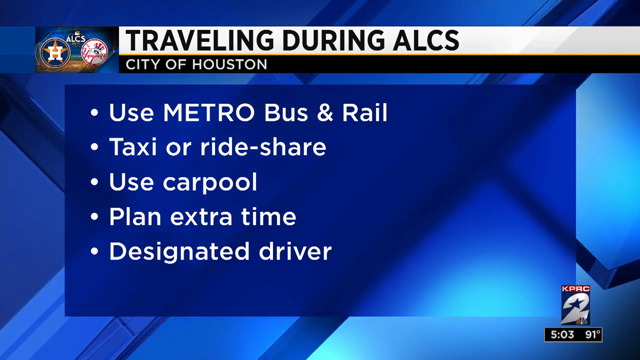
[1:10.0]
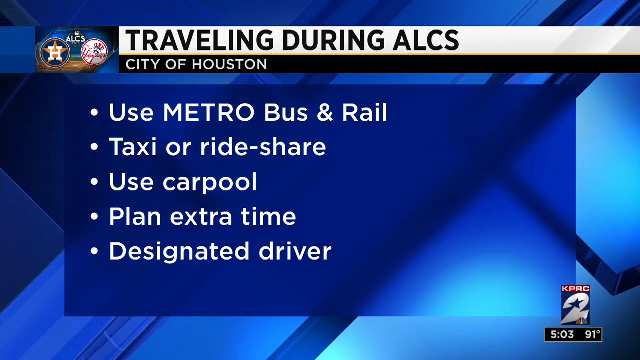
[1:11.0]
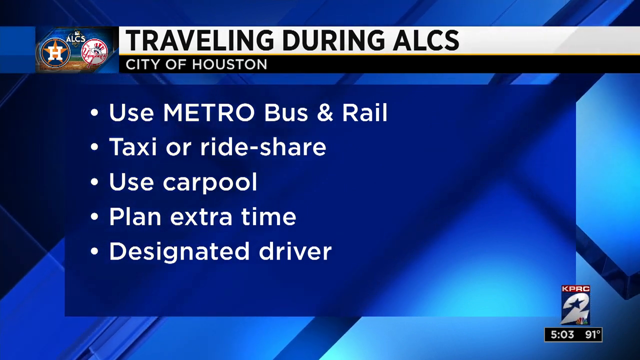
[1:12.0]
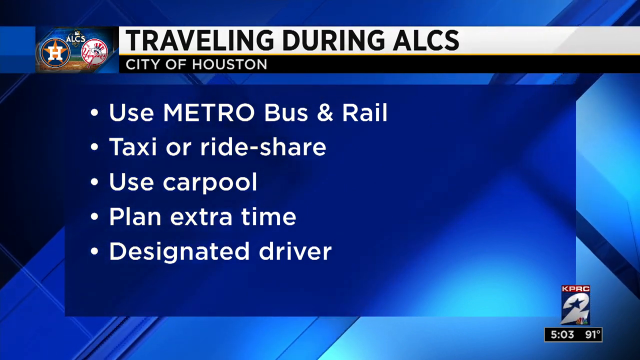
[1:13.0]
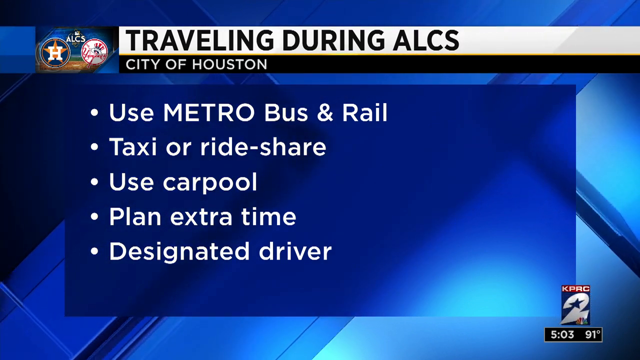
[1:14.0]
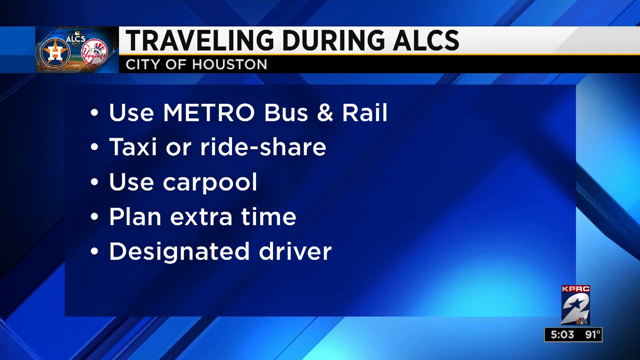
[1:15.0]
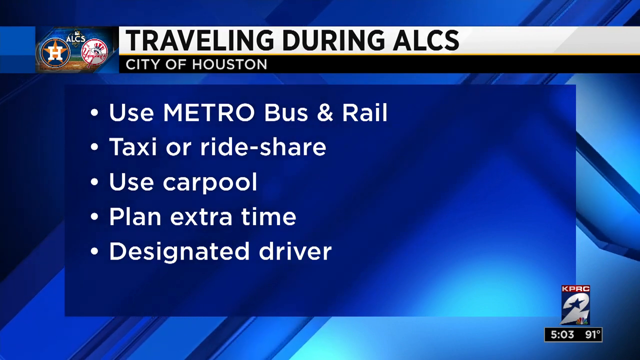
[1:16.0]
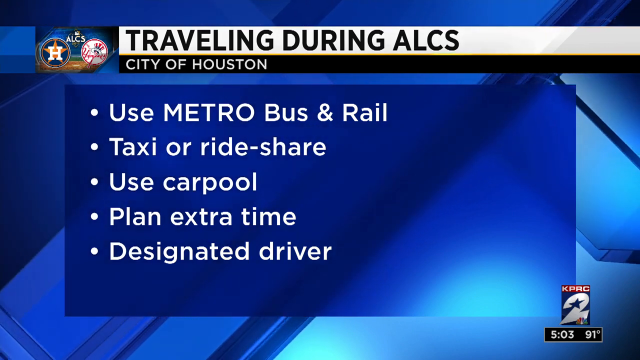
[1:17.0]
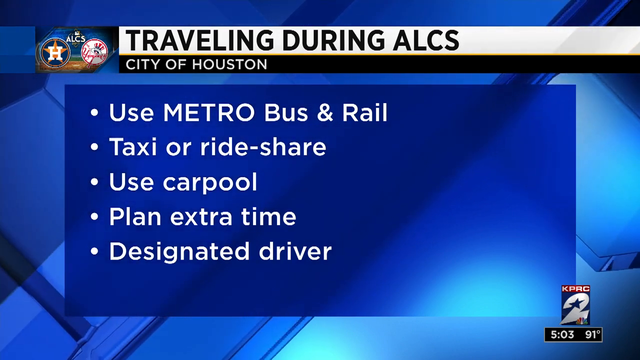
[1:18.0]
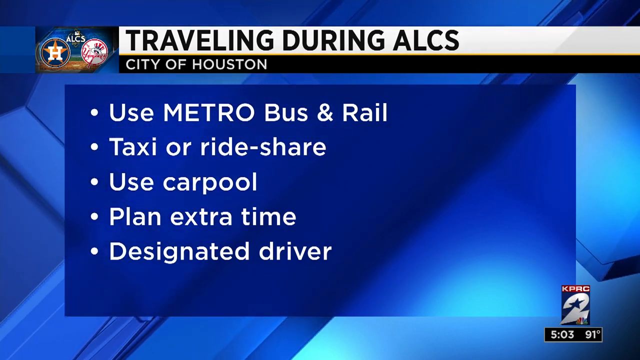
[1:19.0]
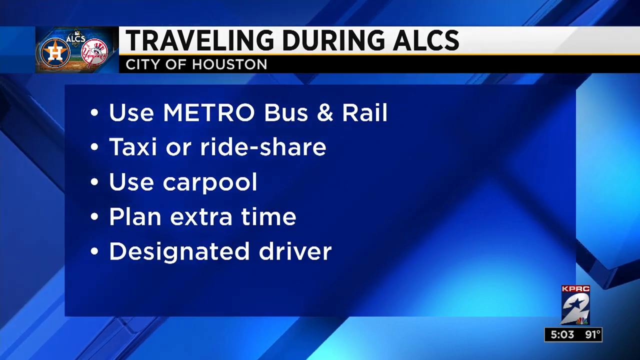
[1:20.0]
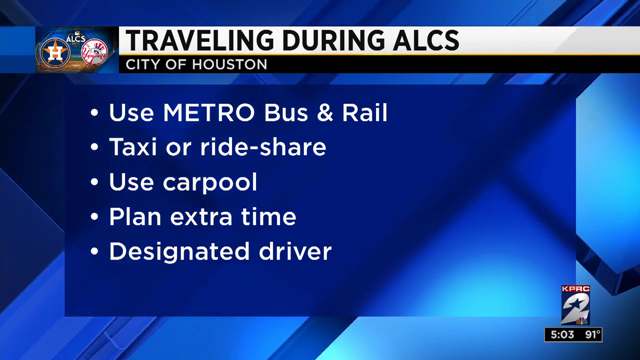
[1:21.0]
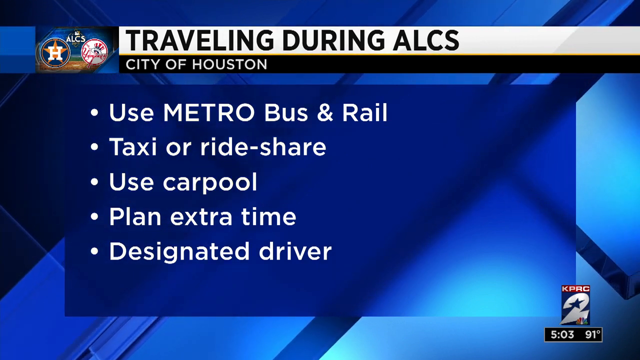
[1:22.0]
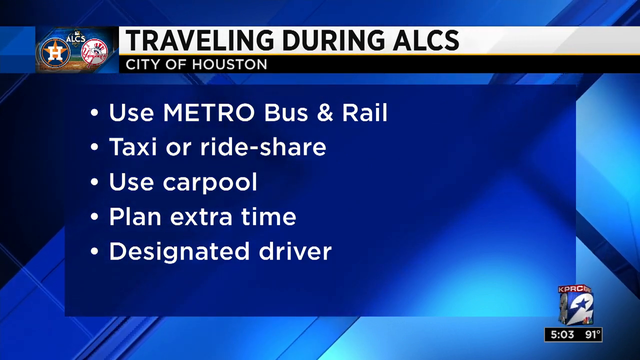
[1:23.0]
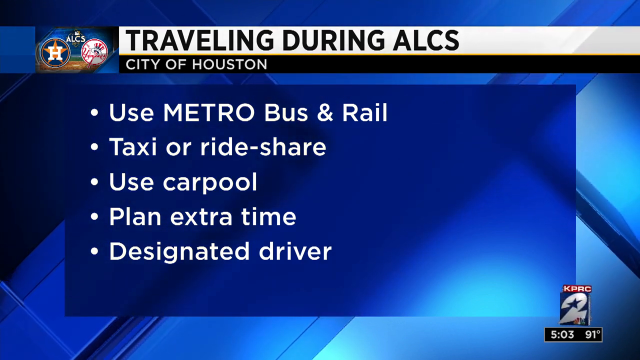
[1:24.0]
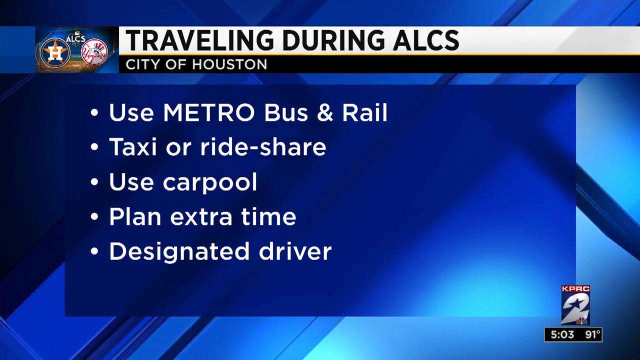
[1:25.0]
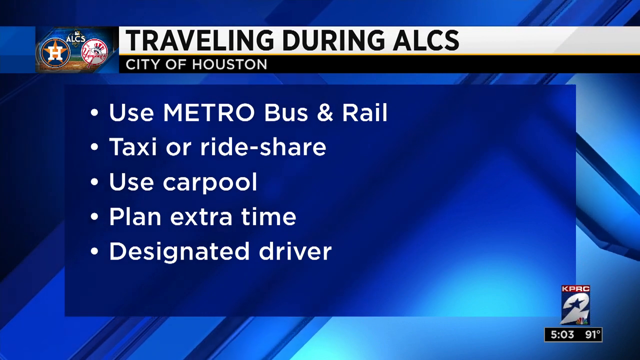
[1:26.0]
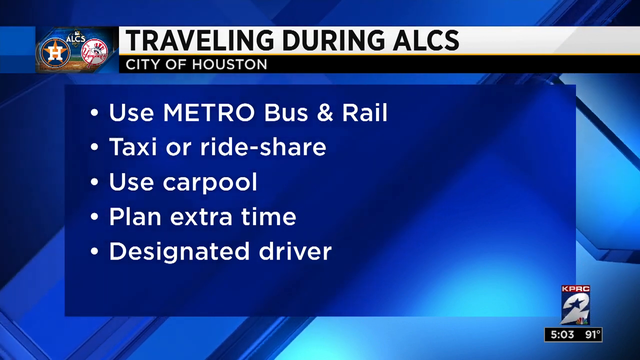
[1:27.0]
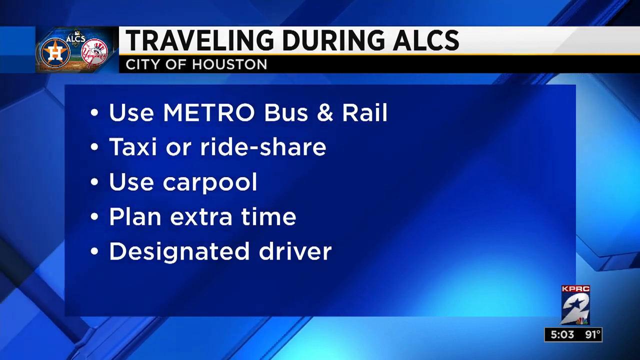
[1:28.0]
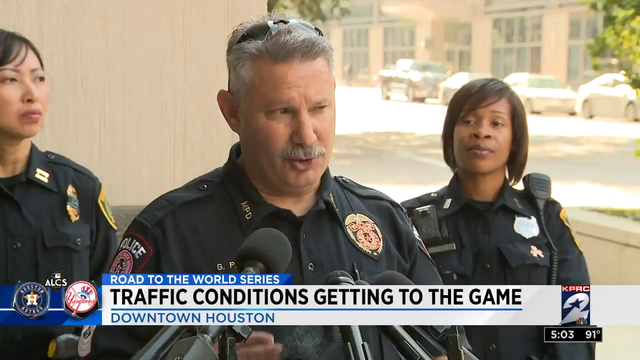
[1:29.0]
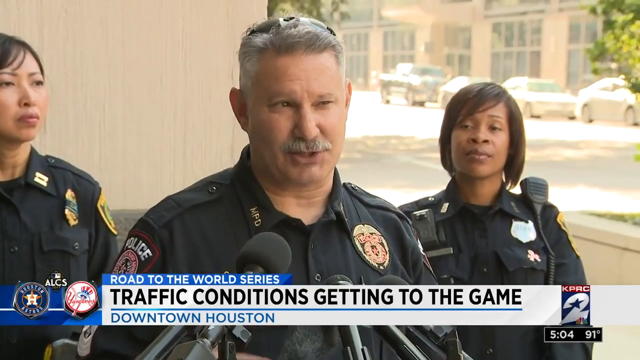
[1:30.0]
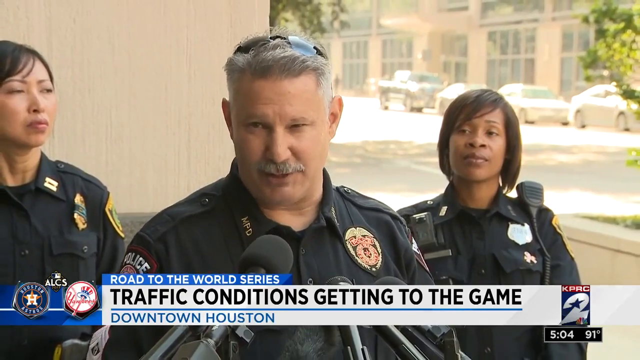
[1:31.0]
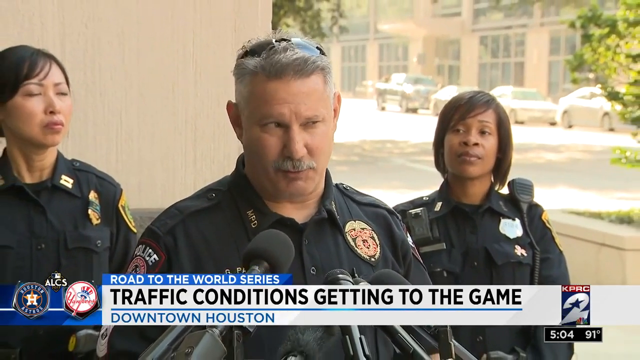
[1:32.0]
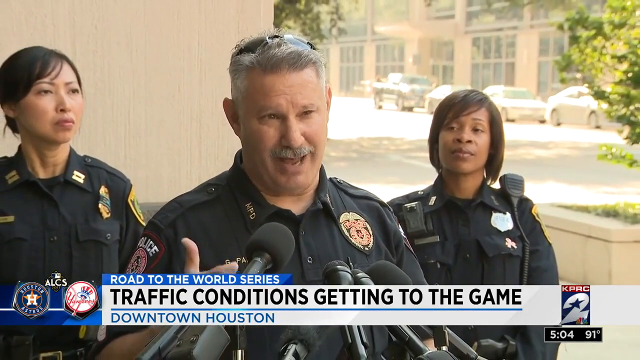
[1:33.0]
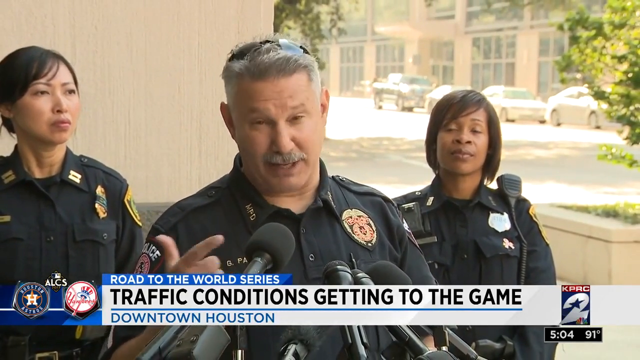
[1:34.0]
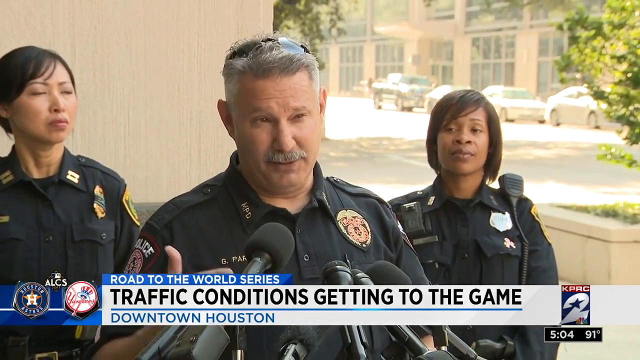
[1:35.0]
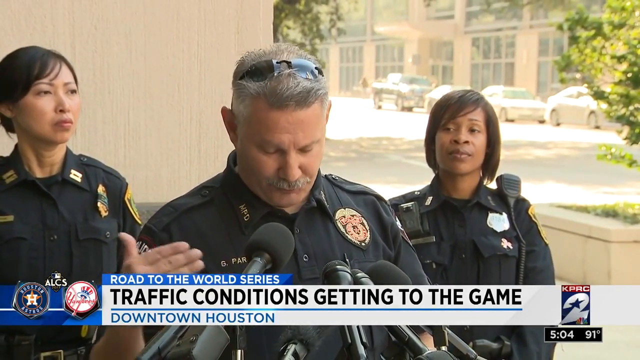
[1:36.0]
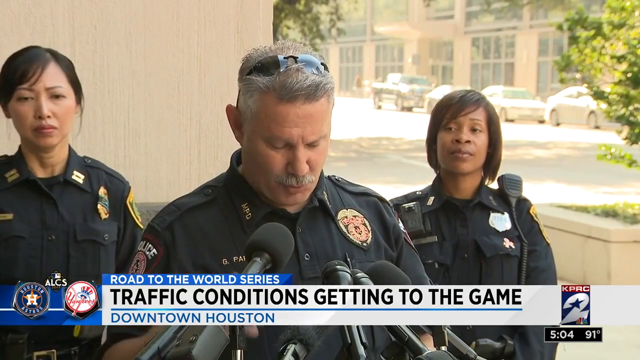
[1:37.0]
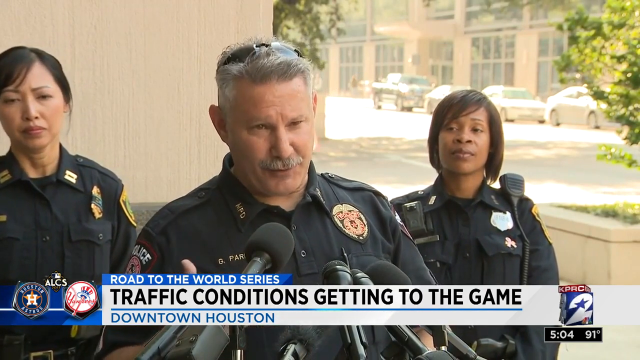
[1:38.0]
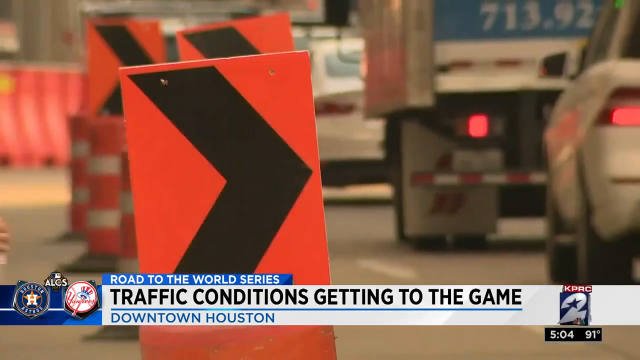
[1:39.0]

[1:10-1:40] The screen showing how to get to the game and which routes are better to take stays up for about 10 seconds. The video then cuts to a policeman giving a press interview outside. Behind him are two female officers: an Asian officer to his left and a Black officer to his right, who is looking at him. The speaking officer has short grey hair, sunglasses on his head and a grey moustache. It is a sunny day with trees. There is a road just behind the officer on the right, with parked cars, a building across the street, and concrete everywhere. The ticker at the bottom reads "traffic conditions get into the game". The officer makes ordinary hand gestures as he talks. The video then cuts to a bright orange highlighted board with a black arrow pointing to the right, and a lady crossing the road.